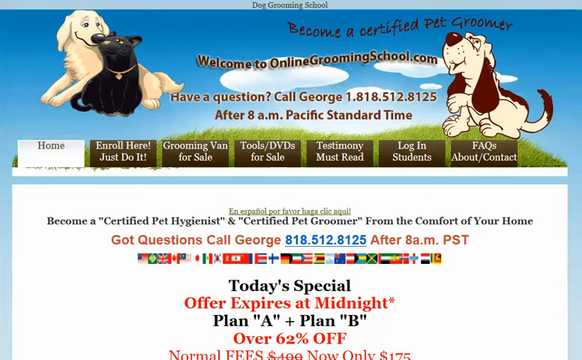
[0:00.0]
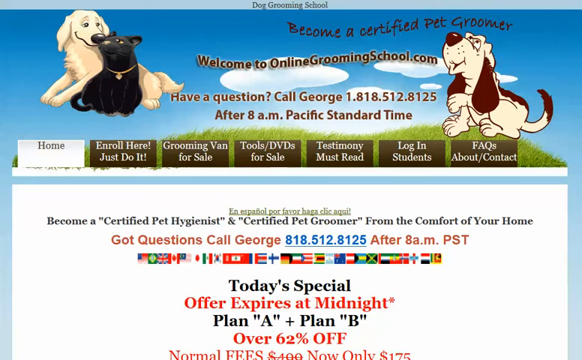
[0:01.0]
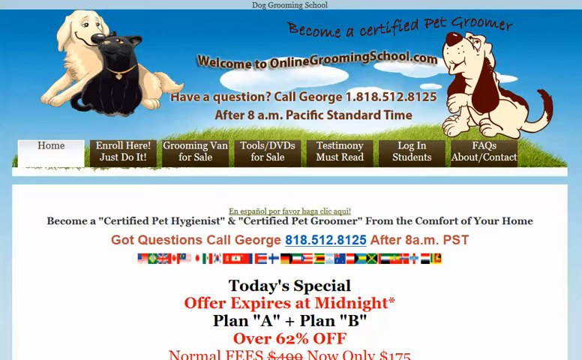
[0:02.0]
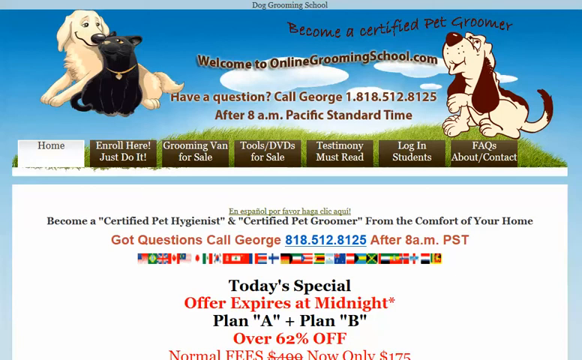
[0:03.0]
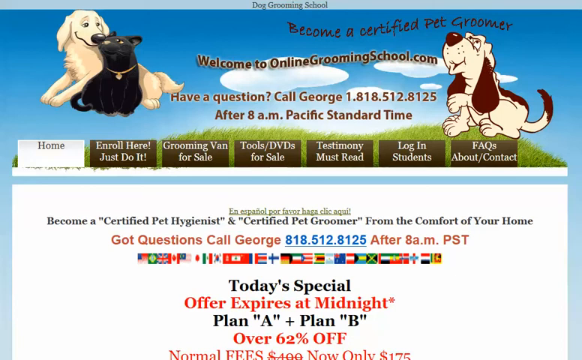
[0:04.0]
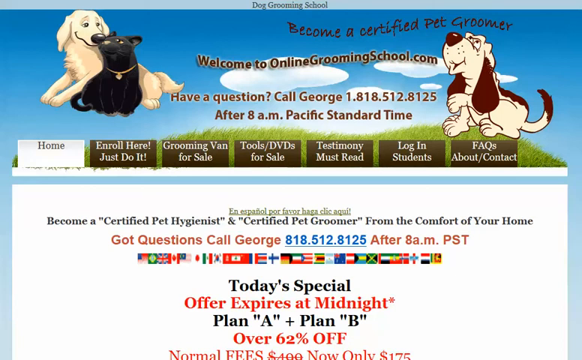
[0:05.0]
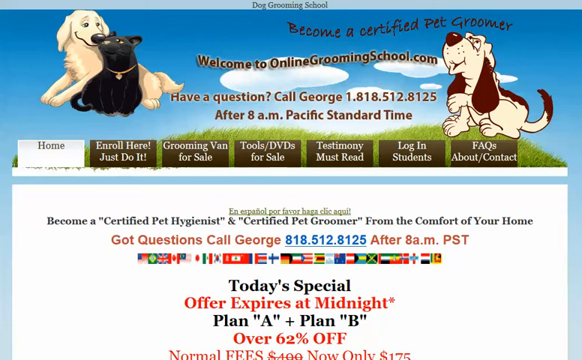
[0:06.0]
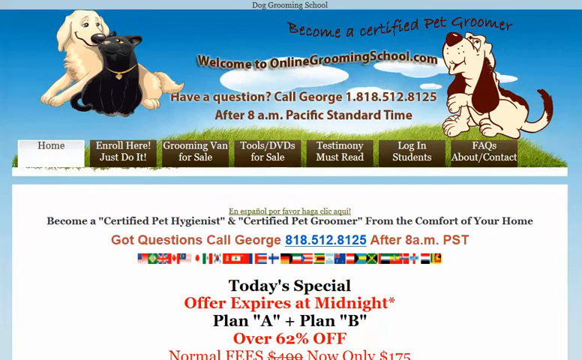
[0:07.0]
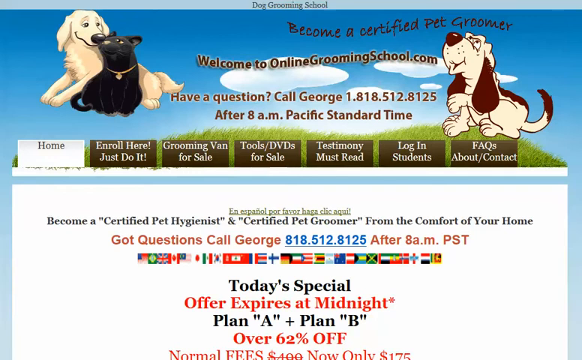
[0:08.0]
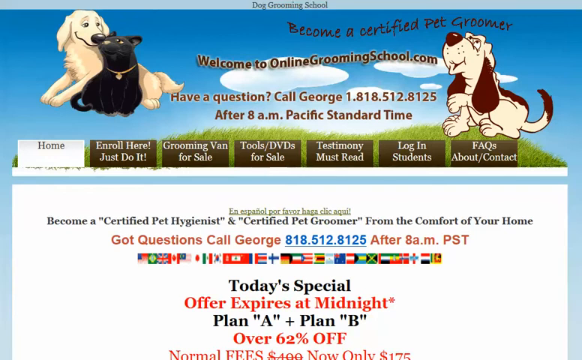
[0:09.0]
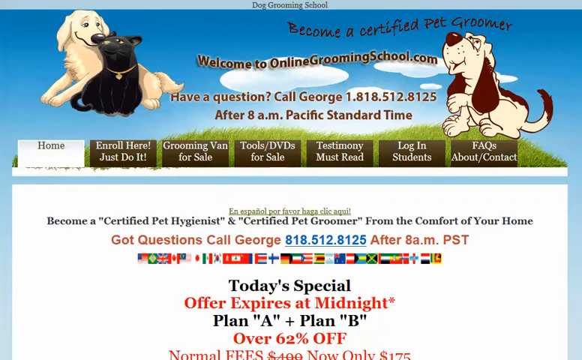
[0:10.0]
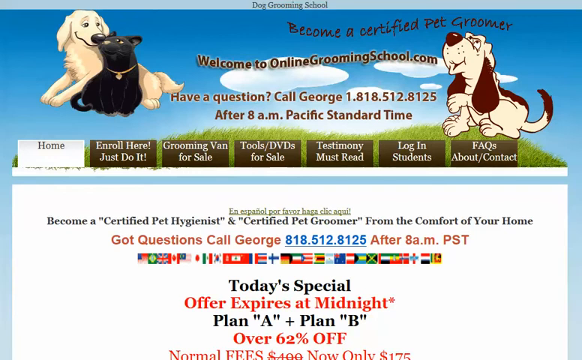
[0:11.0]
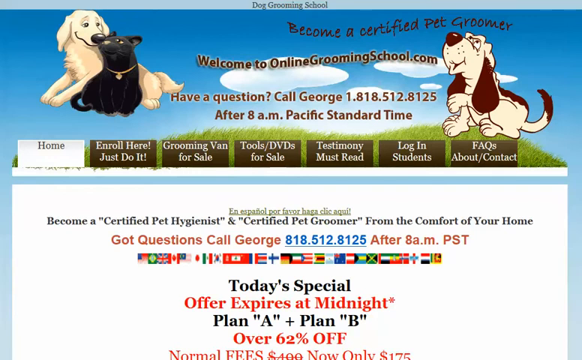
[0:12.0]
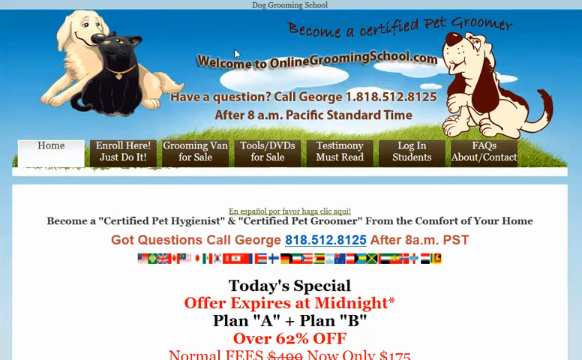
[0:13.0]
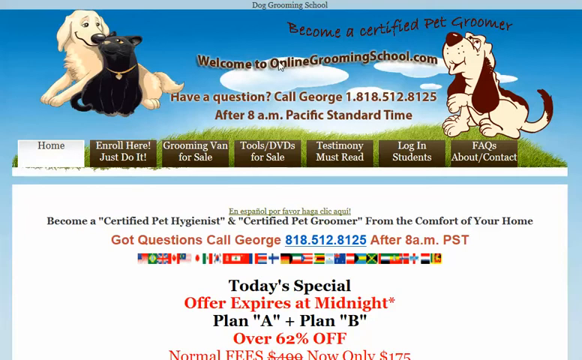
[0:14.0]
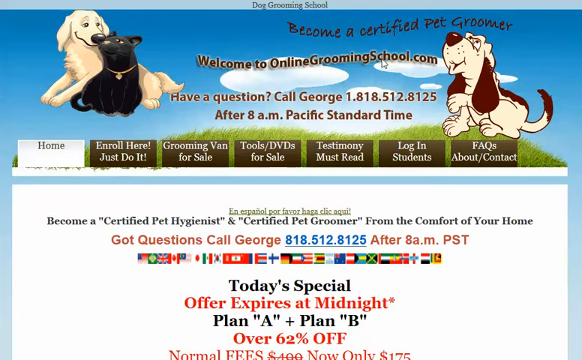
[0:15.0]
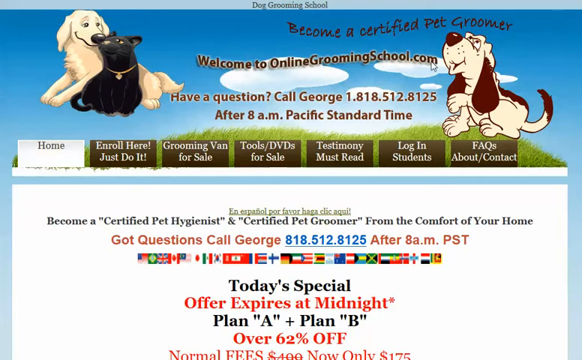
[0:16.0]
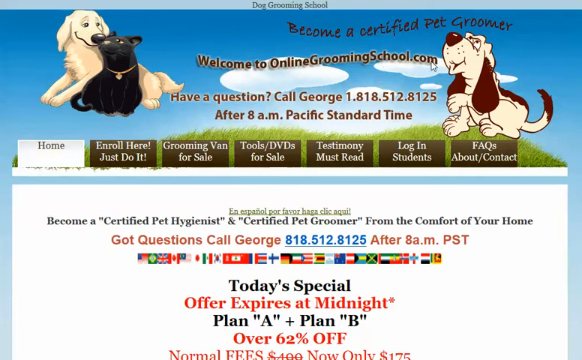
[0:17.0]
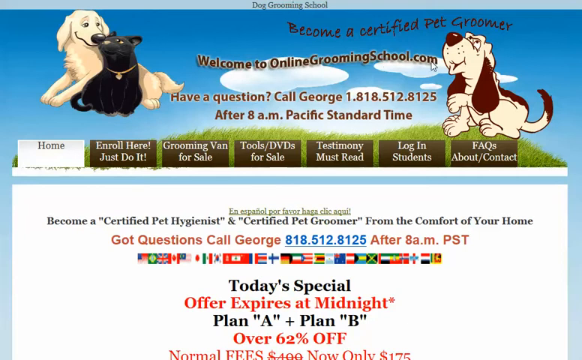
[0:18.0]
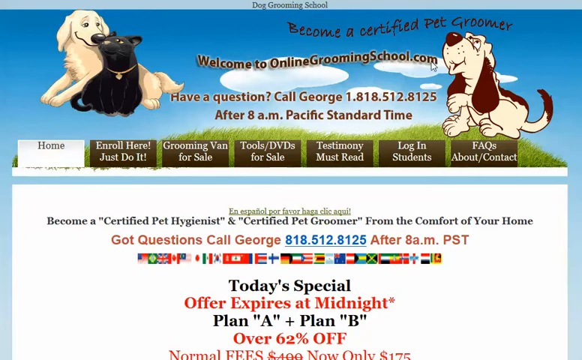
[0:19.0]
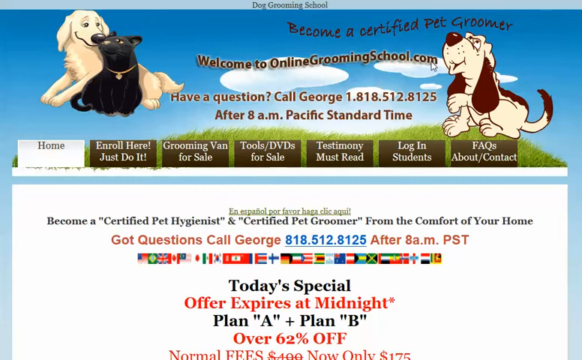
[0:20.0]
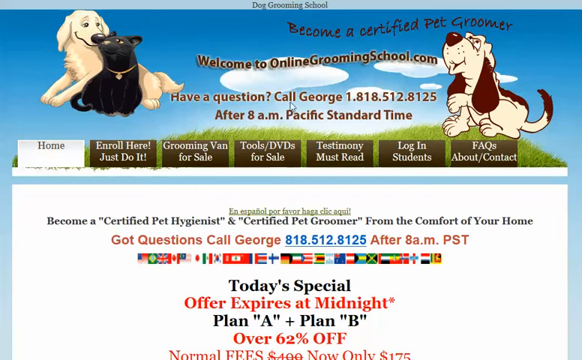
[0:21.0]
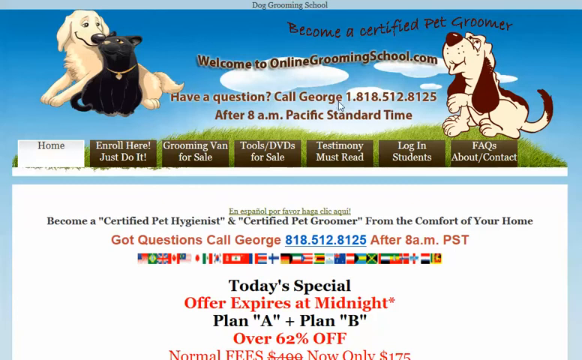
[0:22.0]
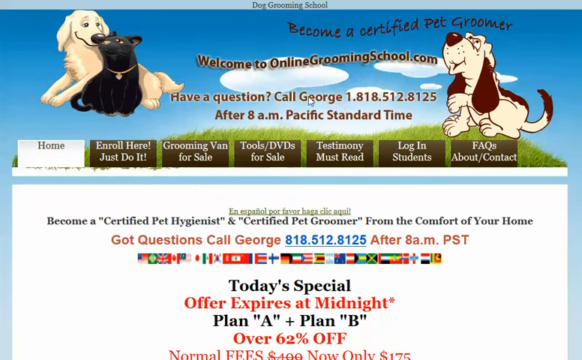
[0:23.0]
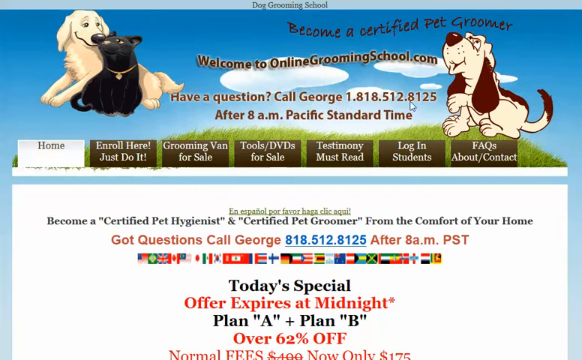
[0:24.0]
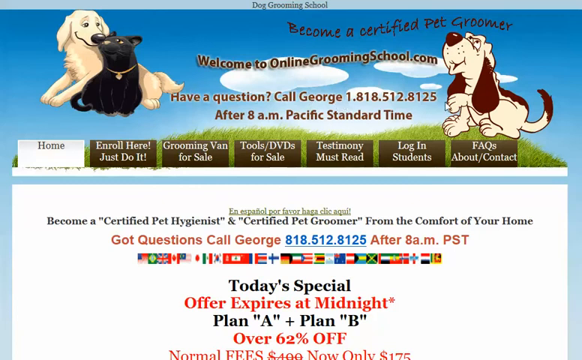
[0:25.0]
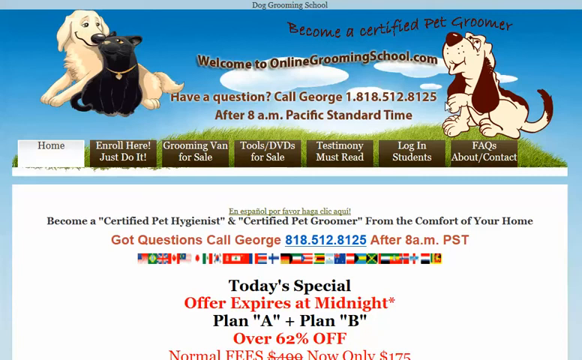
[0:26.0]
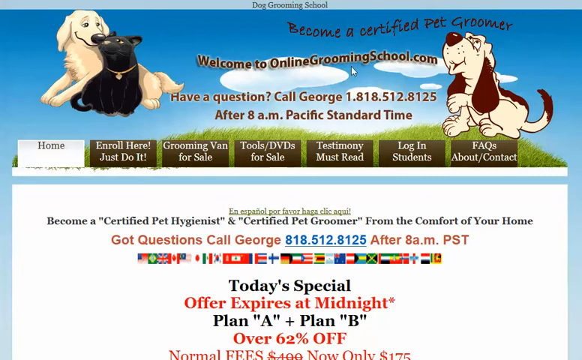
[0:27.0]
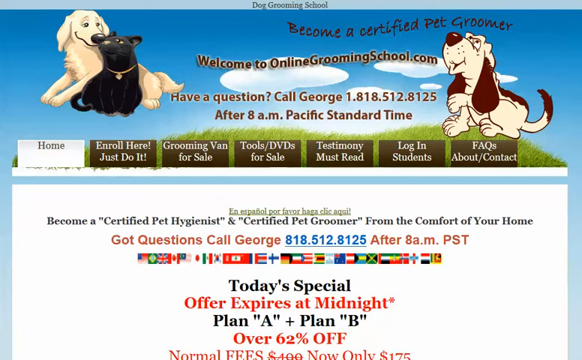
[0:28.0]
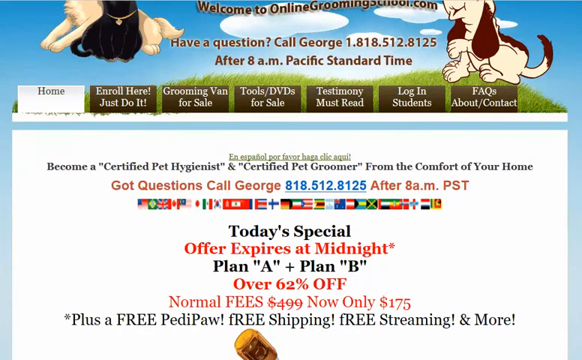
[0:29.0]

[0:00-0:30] A website for a dog grooming school is on screen. Images of three dogs run across the top of the screen: a white Labrador-type dog and a black short-haired dog on the top left, and a Basset-type hound on the right-hand side. A grassed area with sky and clouds is also at the top. Underneath the dogs are various tabs: "home, enrol here just do it, grooming van for sale, tools, DVDs for sale, testimony must read, login students, FAQs about contact". Below that the text says "become a certified pet hygienist and certified pet groomer from the comfort of your own home", followed by a line about questions that names George, then a telephone number. Further text reads "Today's special offer expires at midnight, plan A and plan B over 62% off." The website is www.welcometoonlinegroomingschool.com, and it says "call after 8am PST". A mouse pointer moves on the screen, highlighting "onlinegroomingschool.com" and then the line about George and the number. The website is then scrolled down.